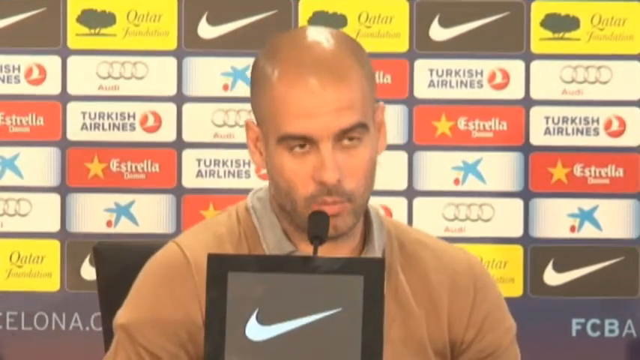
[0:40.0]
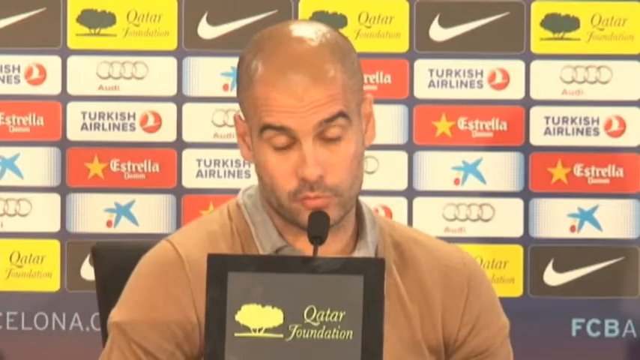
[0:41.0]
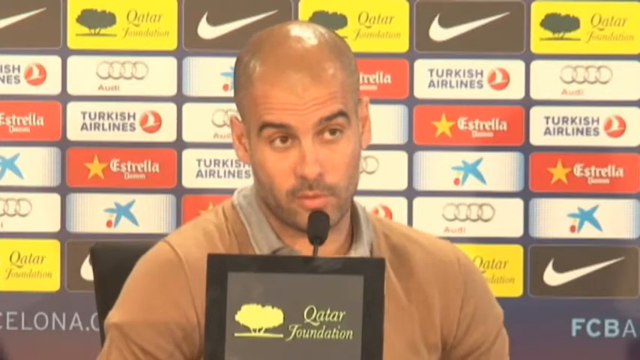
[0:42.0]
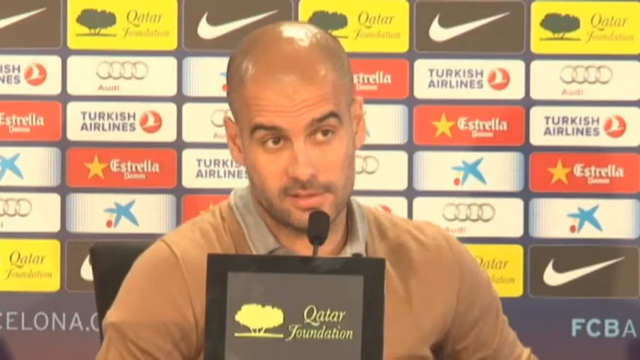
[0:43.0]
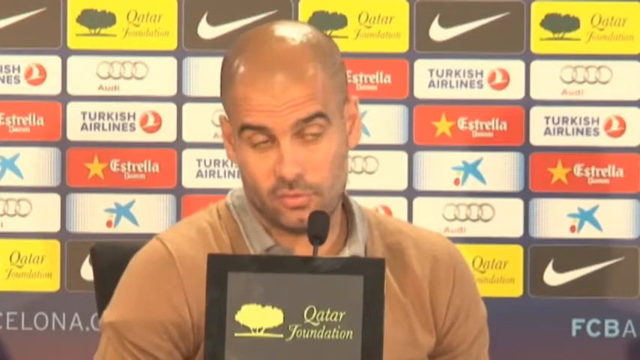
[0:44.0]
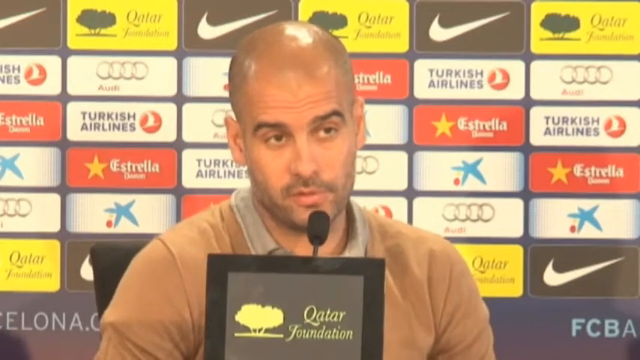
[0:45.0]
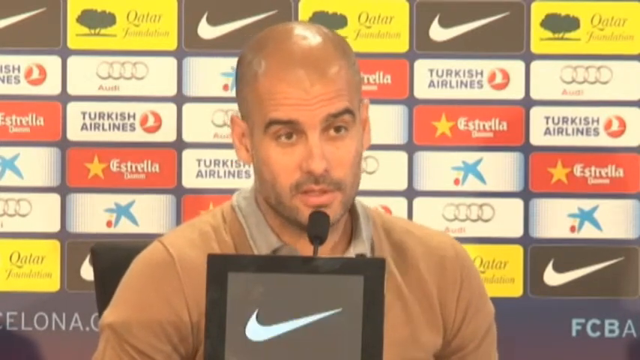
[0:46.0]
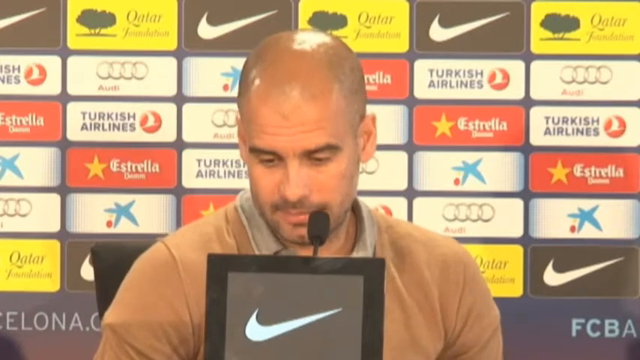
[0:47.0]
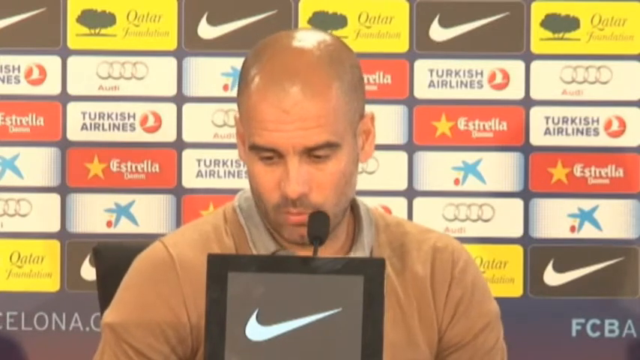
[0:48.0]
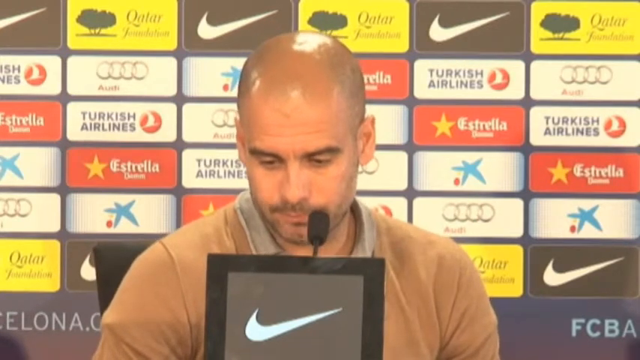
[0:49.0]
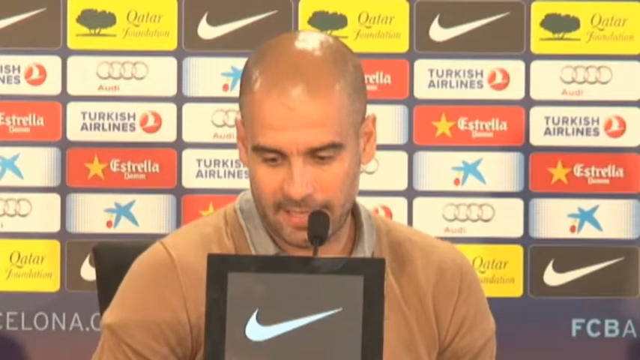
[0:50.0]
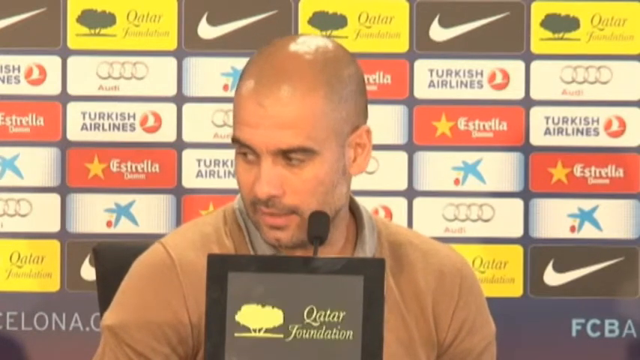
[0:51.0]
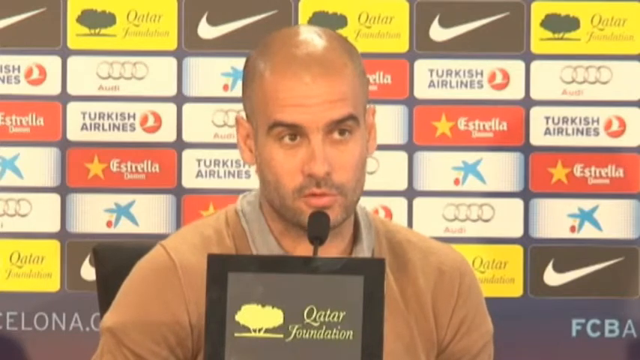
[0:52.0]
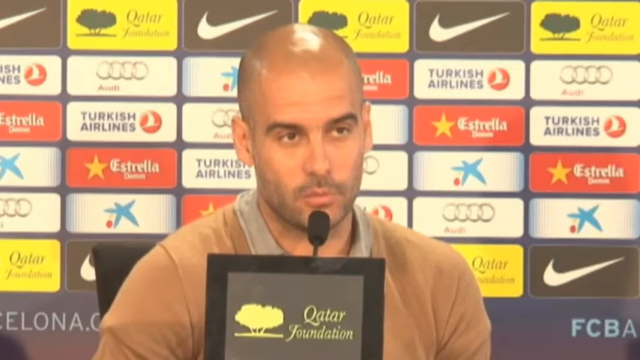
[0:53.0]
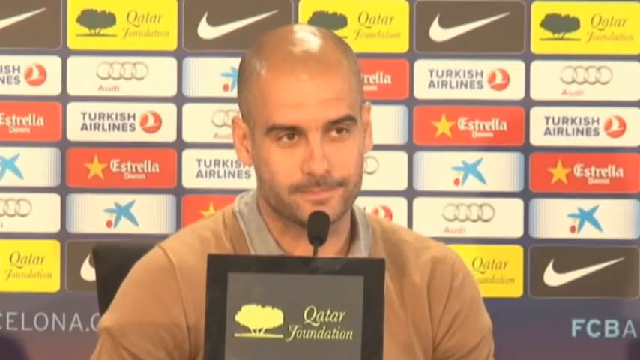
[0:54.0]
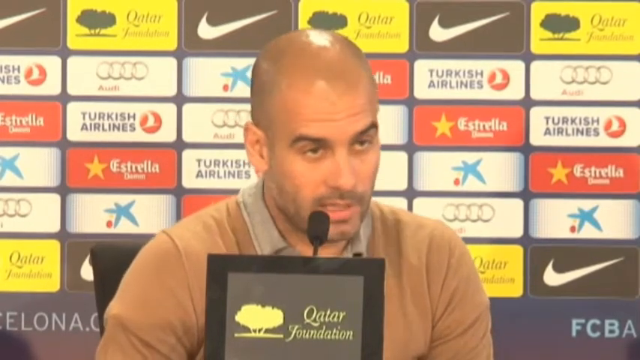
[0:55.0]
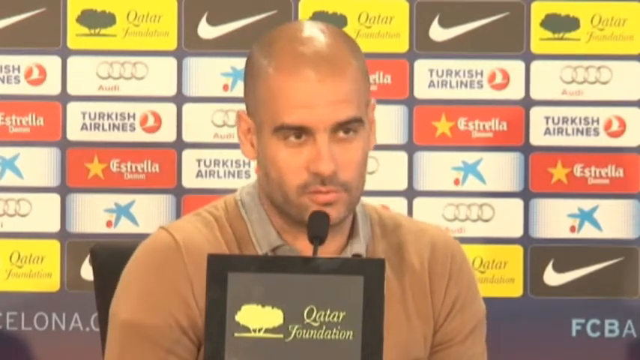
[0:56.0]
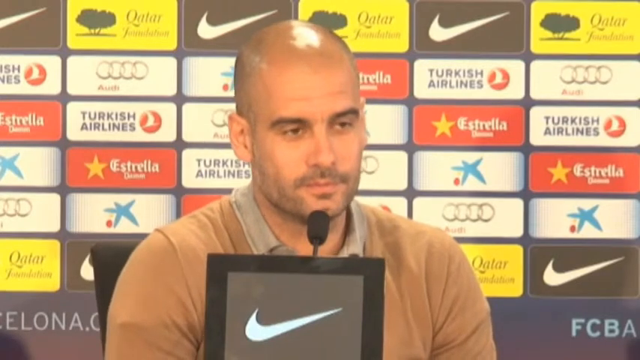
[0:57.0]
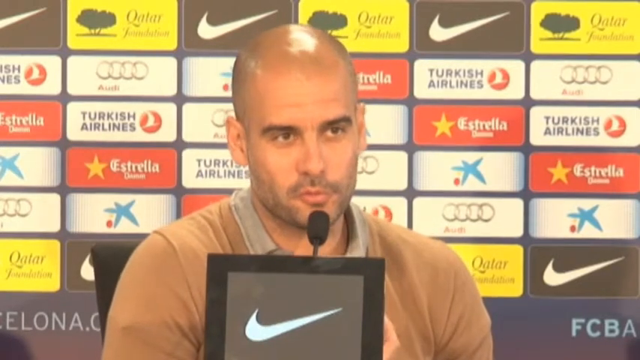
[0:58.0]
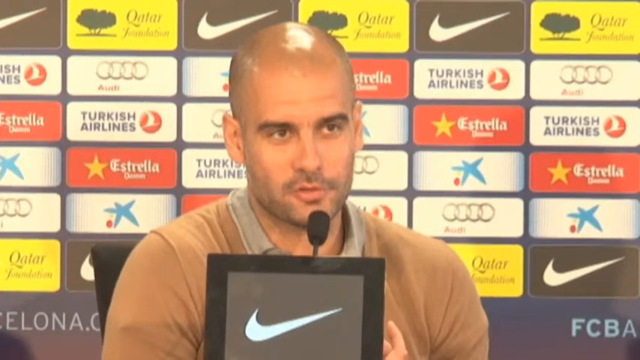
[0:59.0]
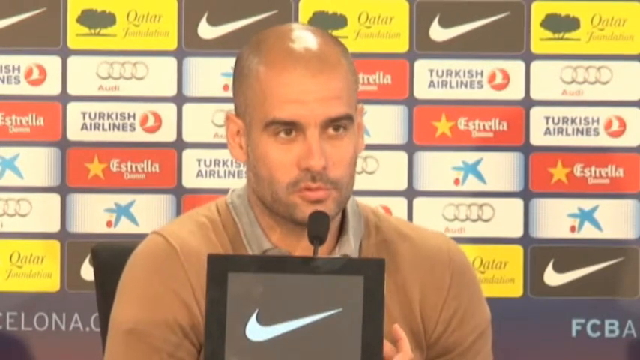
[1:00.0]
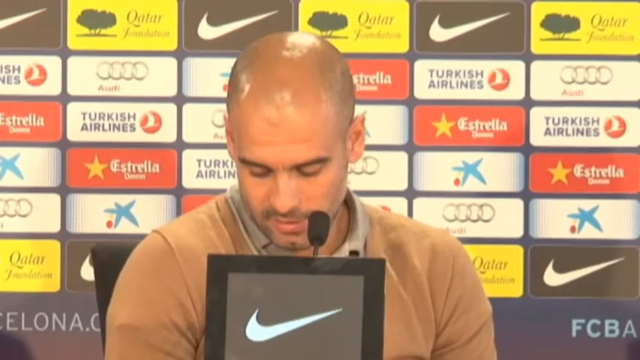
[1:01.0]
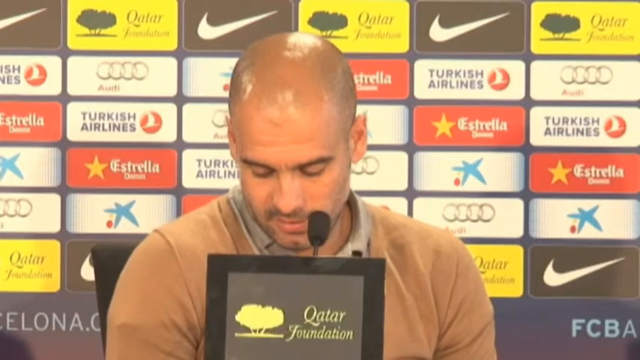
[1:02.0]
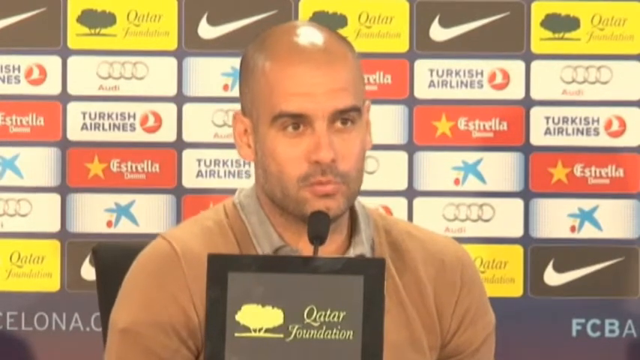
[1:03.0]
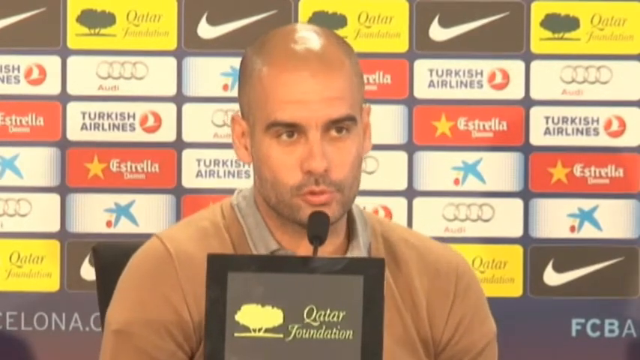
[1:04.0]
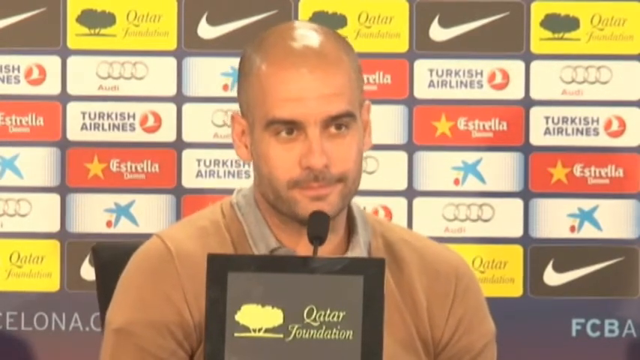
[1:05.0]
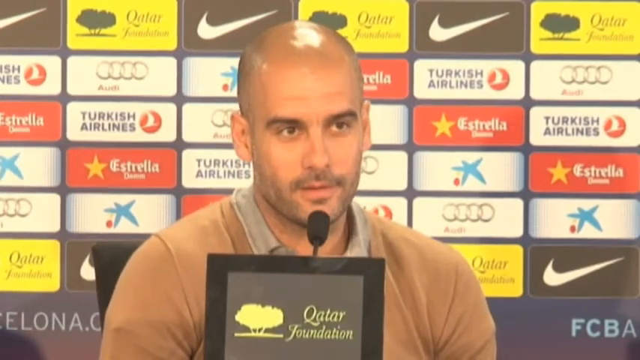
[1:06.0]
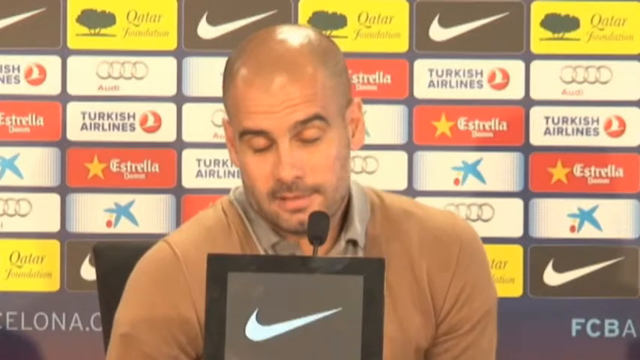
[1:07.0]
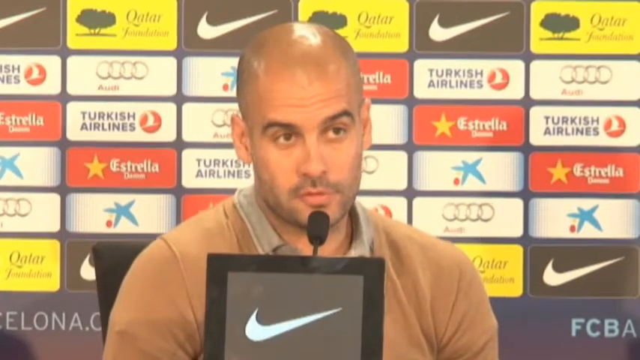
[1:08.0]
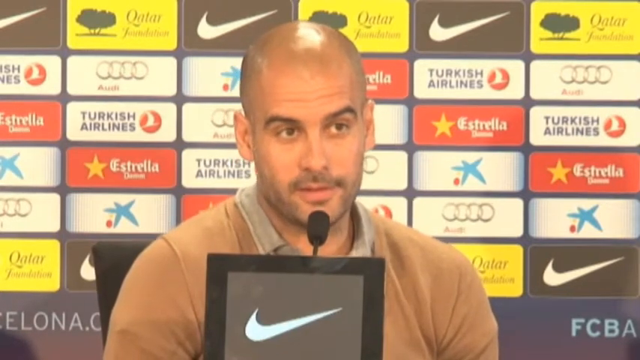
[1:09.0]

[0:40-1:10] Pep Guardiola, head coach of FC Barcelona, continues to speak to the media while the screen in front of him, facing the viewer, rotates between different sponsorship logos. The Qatar Foundation logo appears: a large tree on the left and "Qatar Foundation" written in a scripted font, yellow on black. It rotates with the Nike logo every four to five seconds or so. The coach, the bald one, answers questions from the media. He has a stubble beard and wears what looks like a long-sleeve brown sweater with a tan golf shirt underneath, visible poking up through the collar. He is seated in a black office swivel chair and swivels slightly back and forth as he answers questions during the press conference.